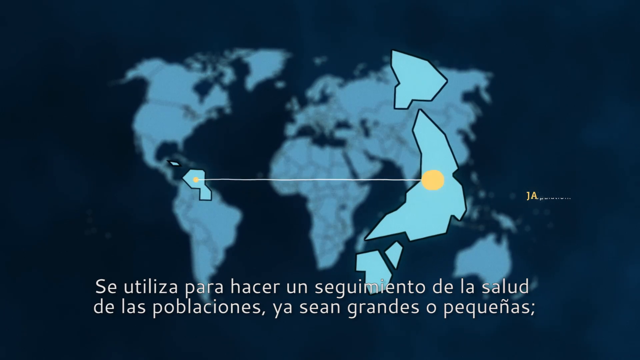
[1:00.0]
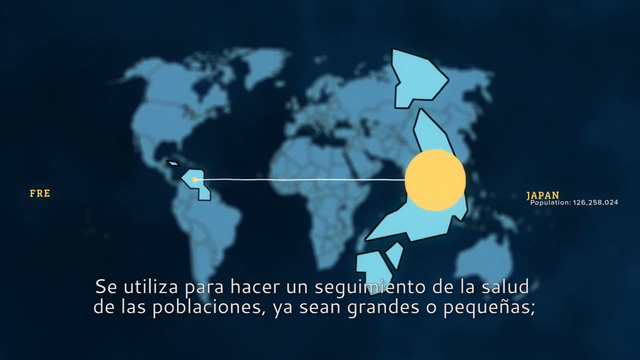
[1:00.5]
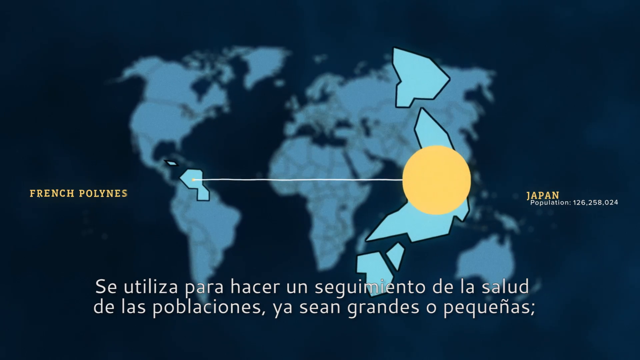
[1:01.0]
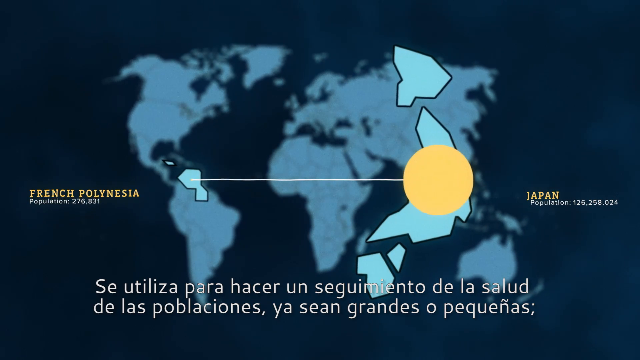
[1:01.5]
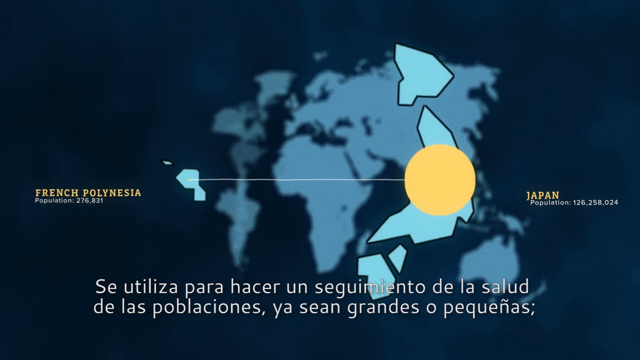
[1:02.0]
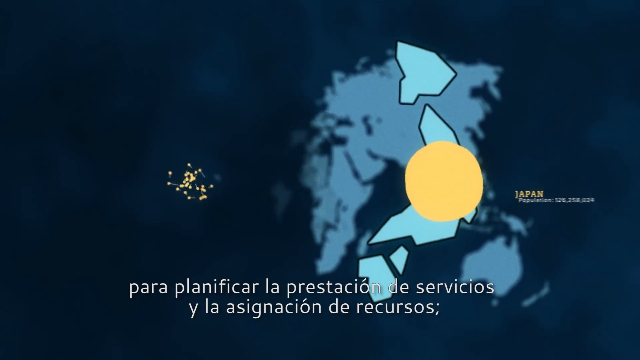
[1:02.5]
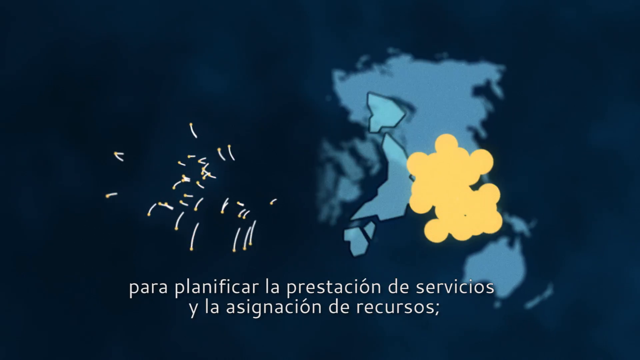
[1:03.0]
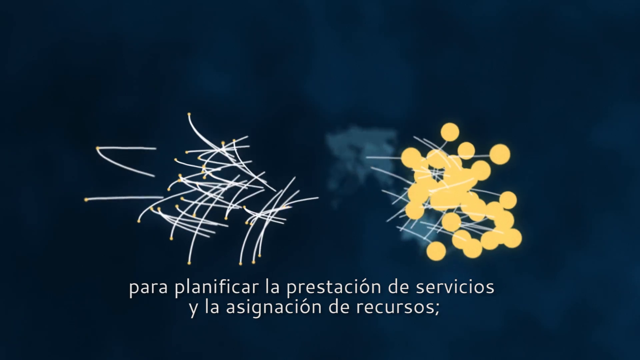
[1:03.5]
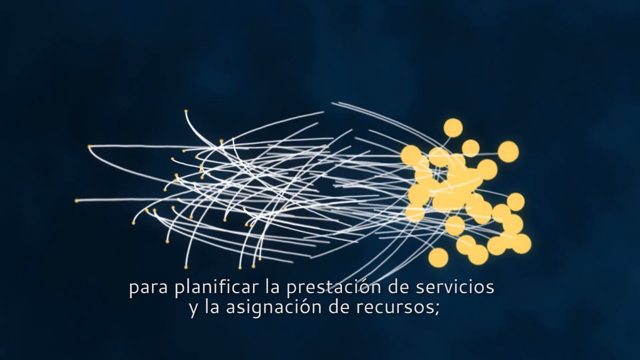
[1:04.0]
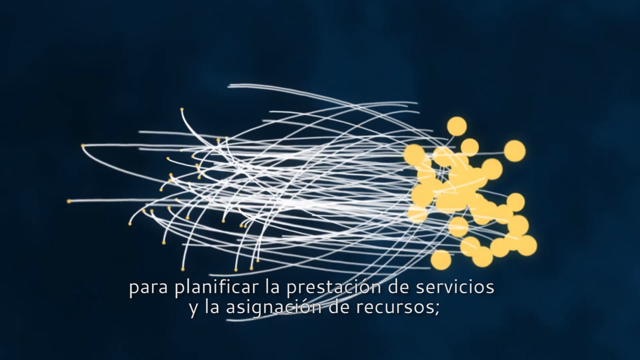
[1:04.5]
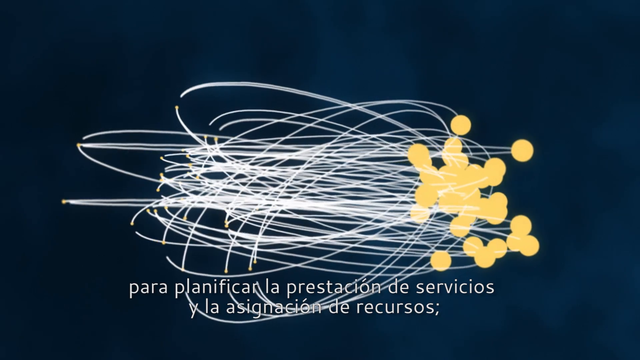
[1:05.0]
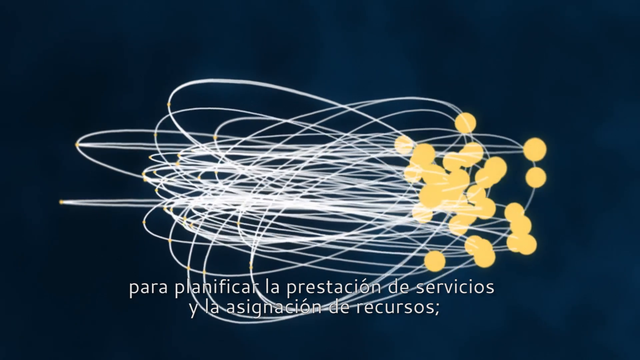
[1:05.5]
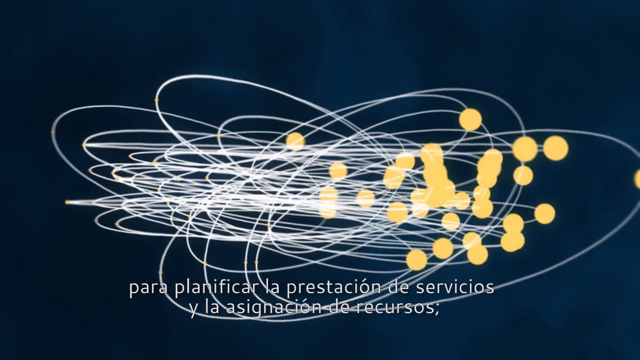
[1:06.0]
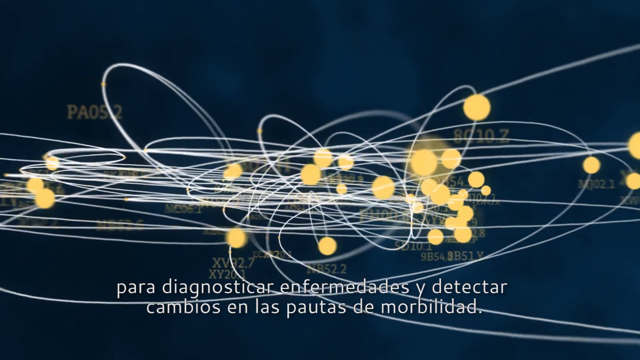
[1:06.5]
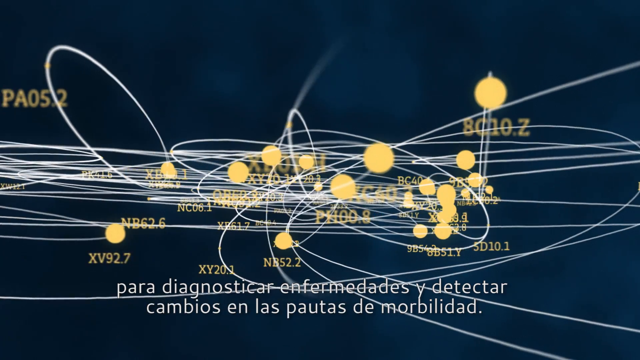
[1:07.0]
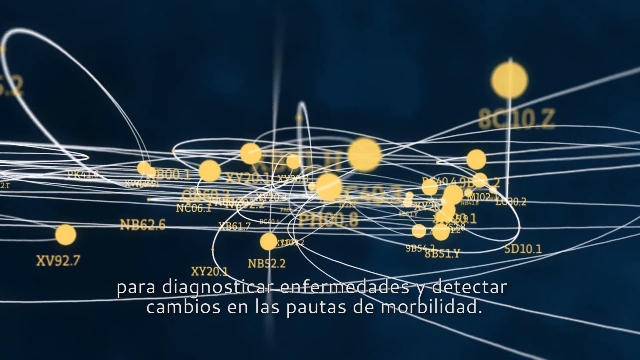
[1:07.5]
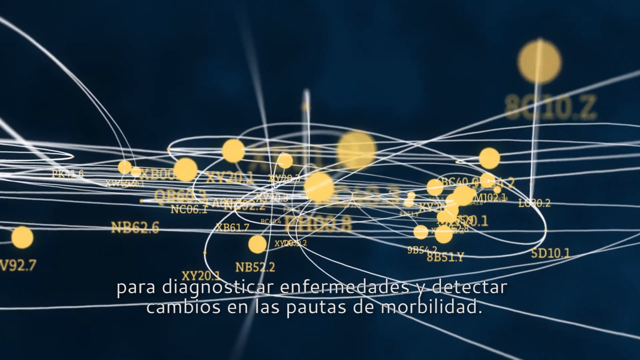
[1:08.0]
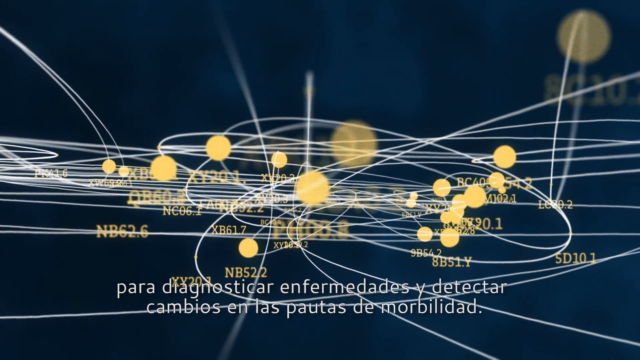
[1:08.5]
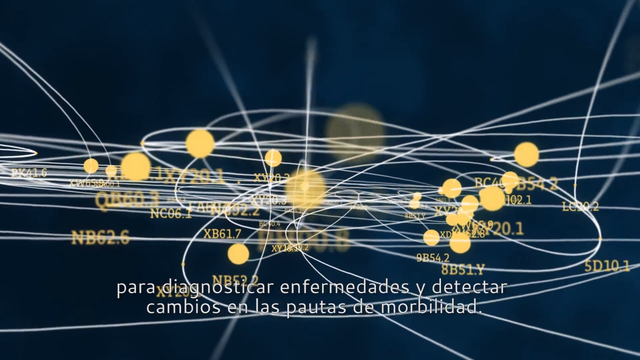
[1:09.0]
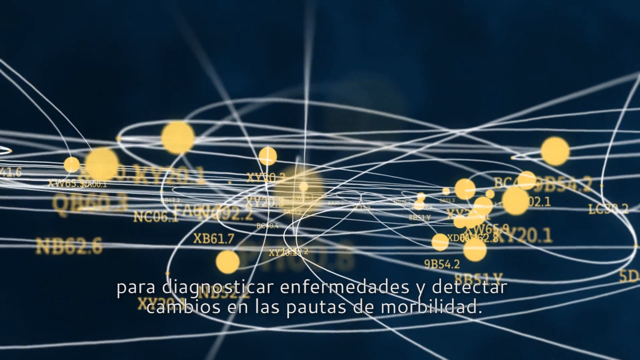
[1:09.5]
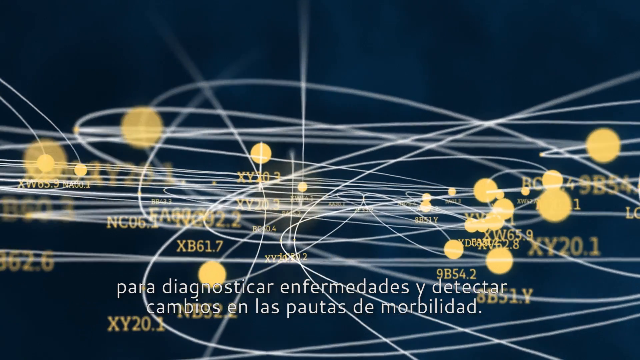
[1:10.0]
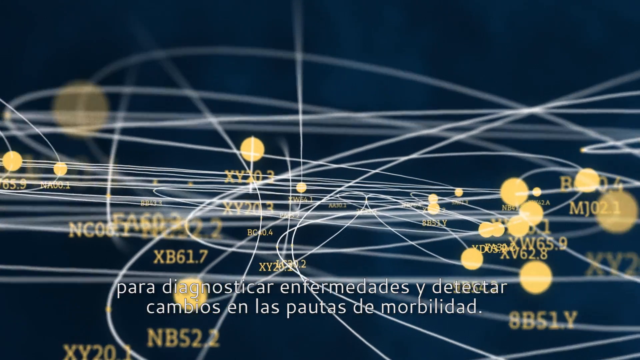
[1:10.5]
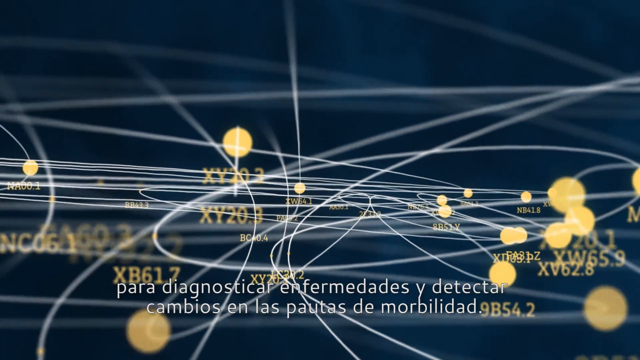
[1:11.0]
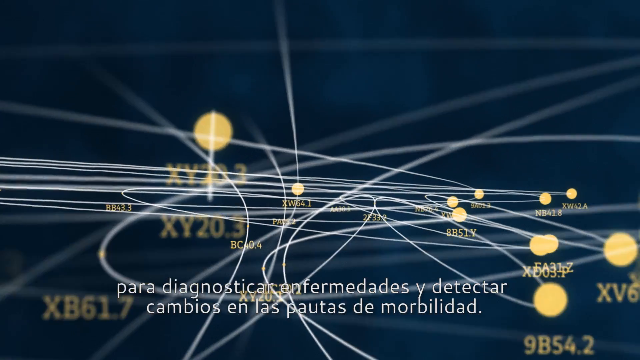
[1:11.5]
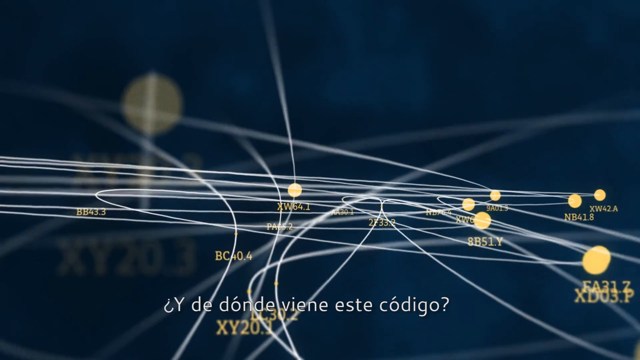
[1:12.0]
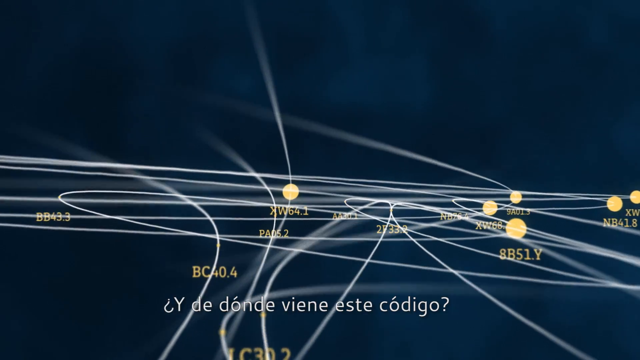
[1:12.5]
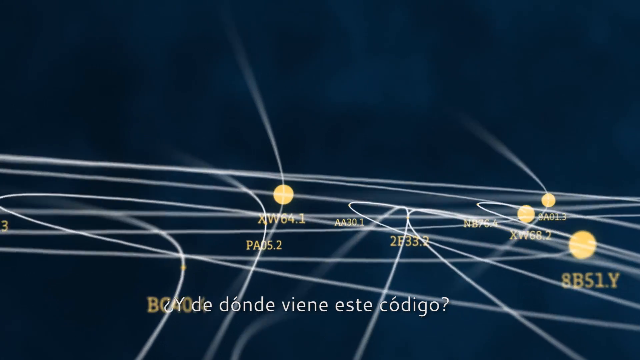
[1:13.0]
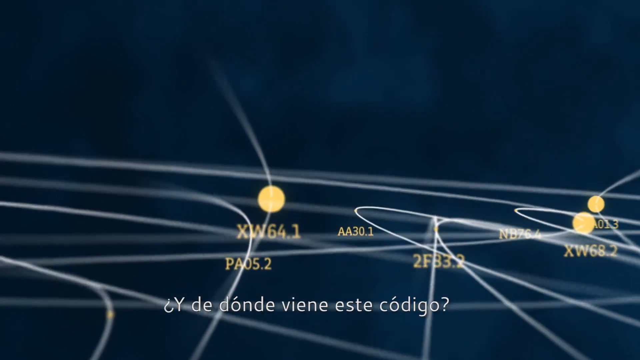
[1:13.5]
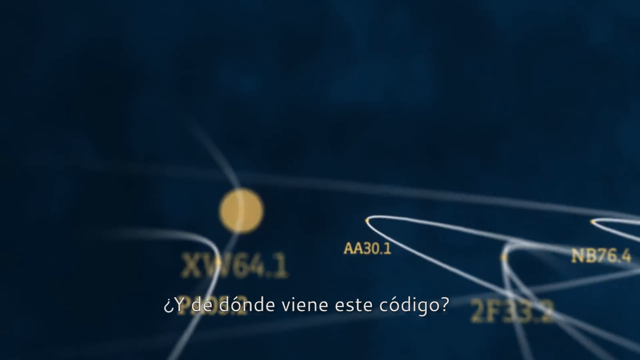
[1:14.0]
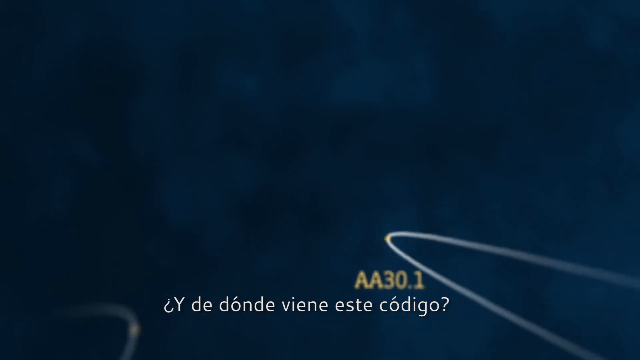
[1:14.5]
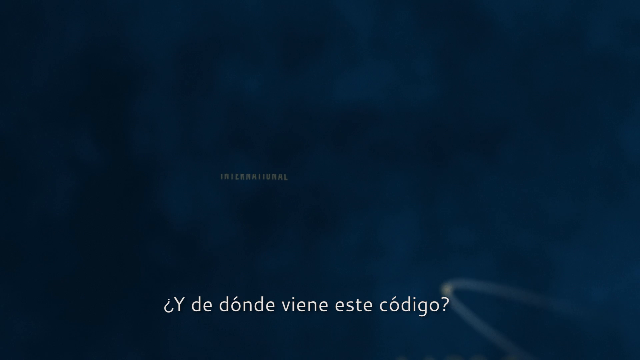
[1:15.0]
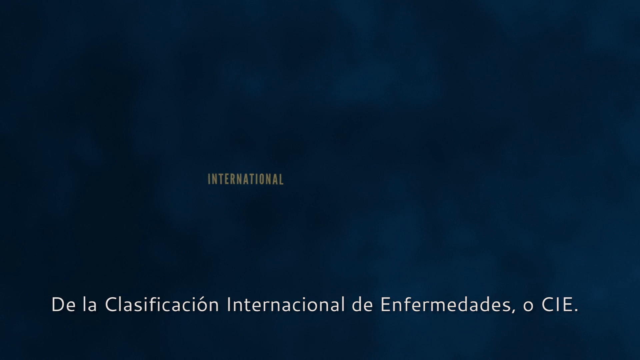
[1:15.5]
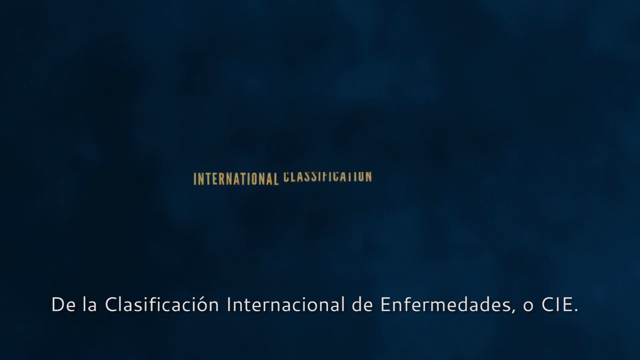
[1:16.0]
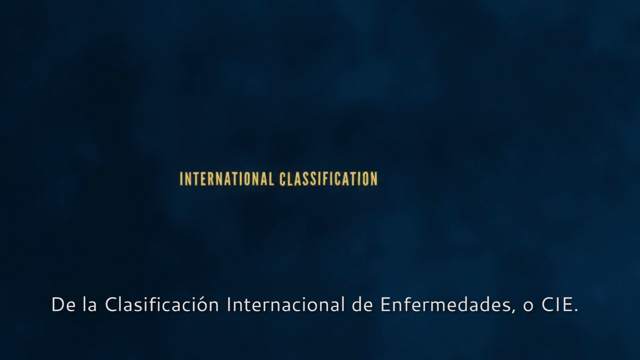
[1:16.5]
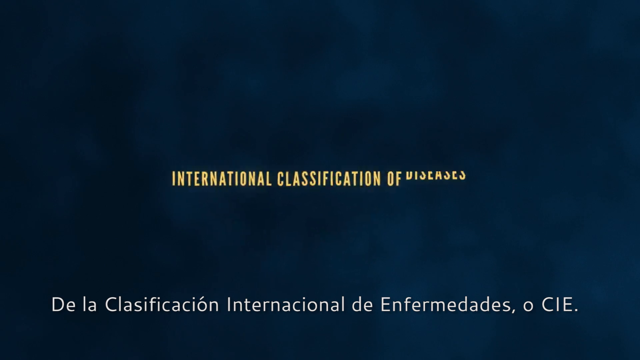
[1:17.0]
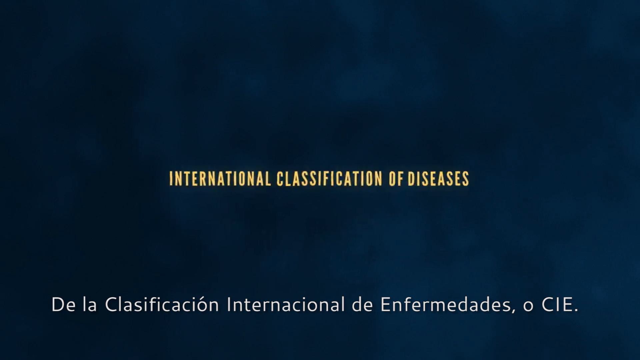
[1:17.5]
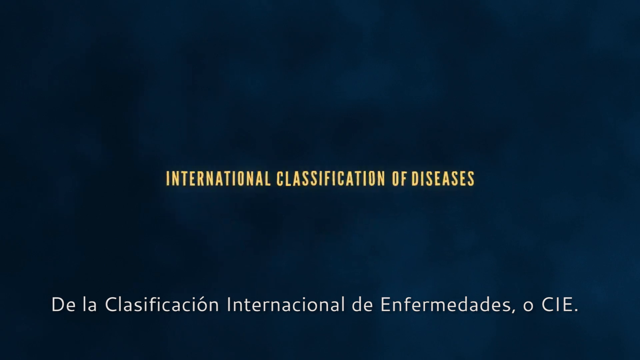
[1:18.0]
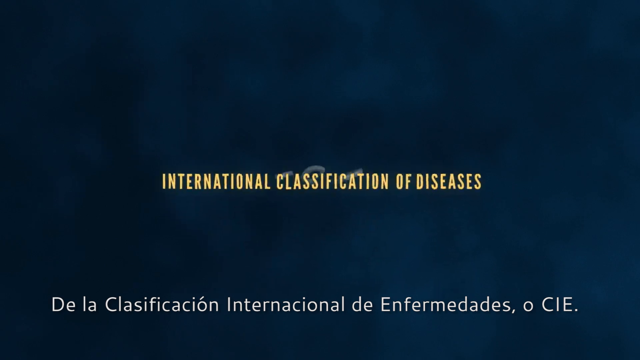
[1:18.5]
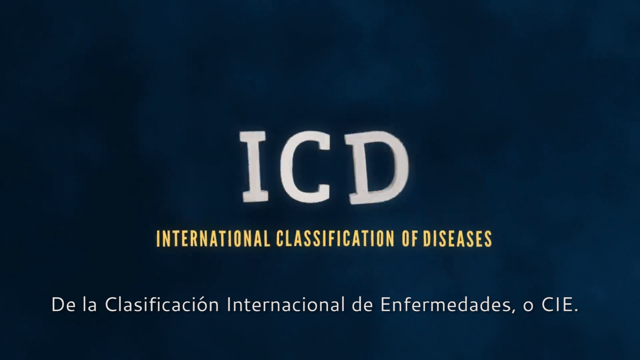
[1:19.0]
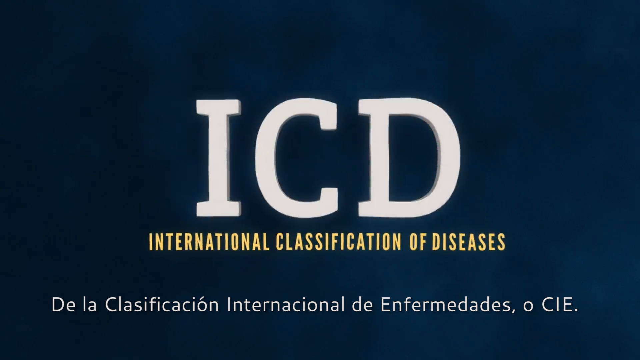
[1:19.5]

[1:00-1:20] A world map is shown on a dark navy background, with blue shapes, almost in the shape of some continents, overlaid on top of it. On the right shape there is a large yellow dot with a line drawn horizontally across it, connecting to the blue shape on the left. The text on the left reads "French Polynesia, population 267831," and the text on the right reads "Japan, population 126258024." All of these shapes zoom away and a new graphic appears, with lots of yellow dots on the right-hand side and many differently shaped lines, some straight and some curved, protruding from them and massed together into quite a messy shape that looks almost like the solar system. The dots and lines spin around and spread out into a mass of connected yellow dots and lines. The camera pans through that shape to a navy blue background with yellow text across the middle reading "International Classification of Diseases," and the letters "ICD" appear in a larger font on top of that text.